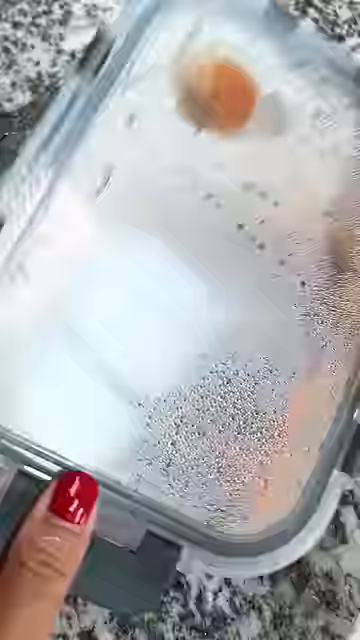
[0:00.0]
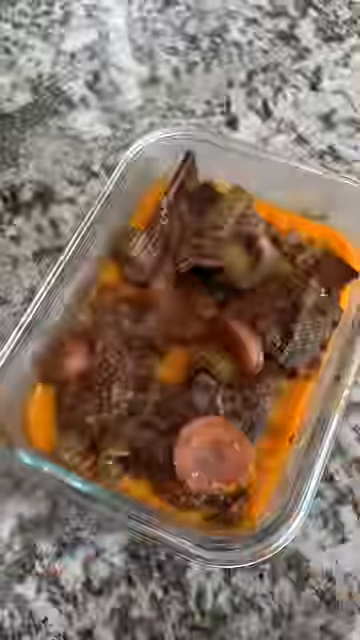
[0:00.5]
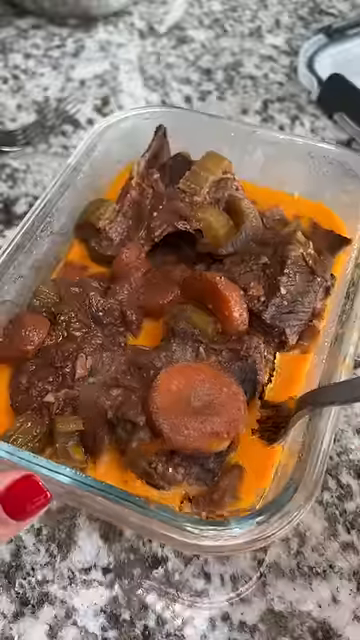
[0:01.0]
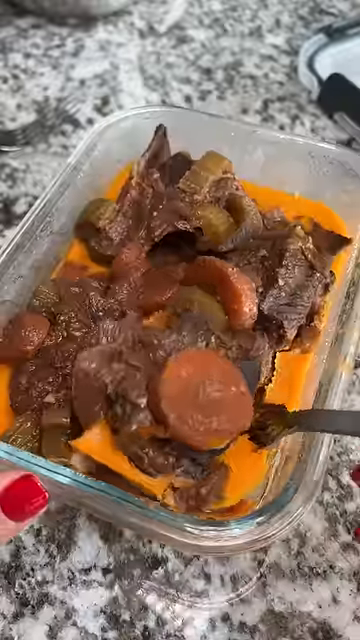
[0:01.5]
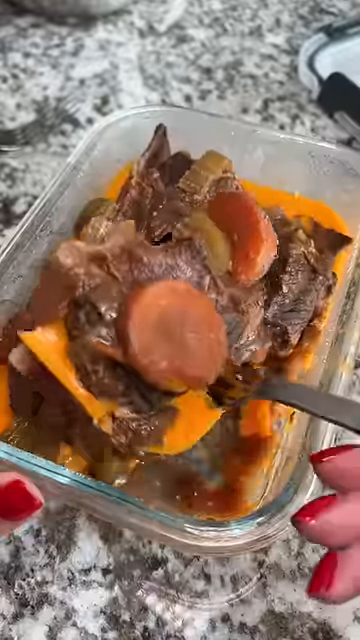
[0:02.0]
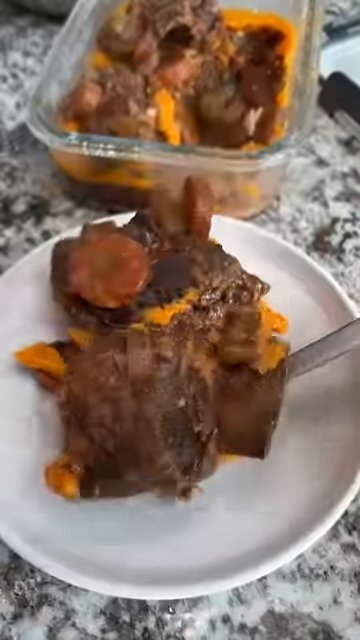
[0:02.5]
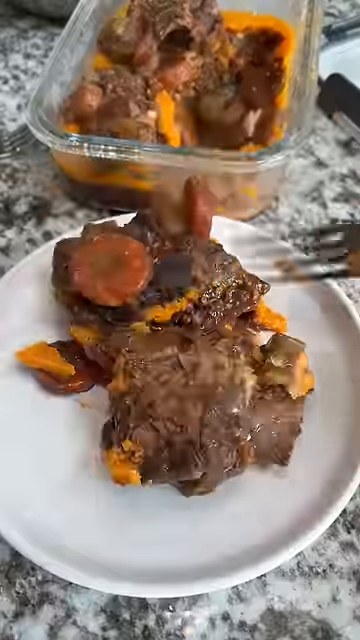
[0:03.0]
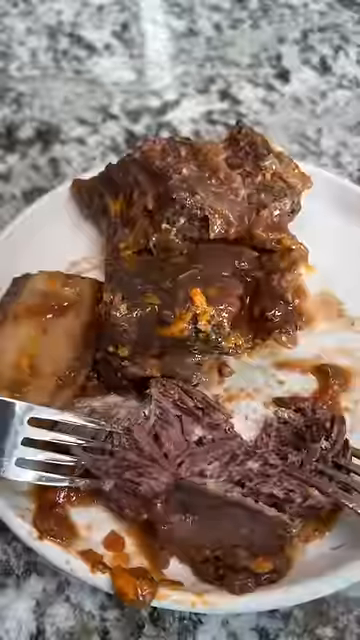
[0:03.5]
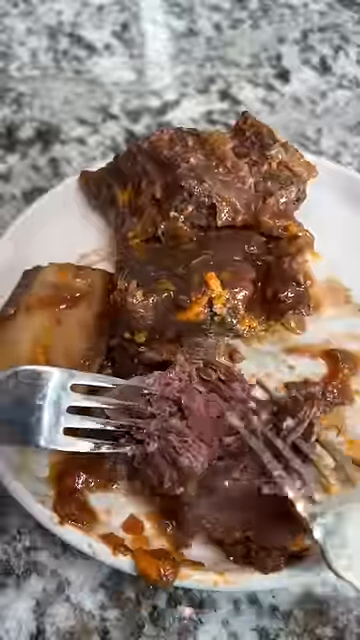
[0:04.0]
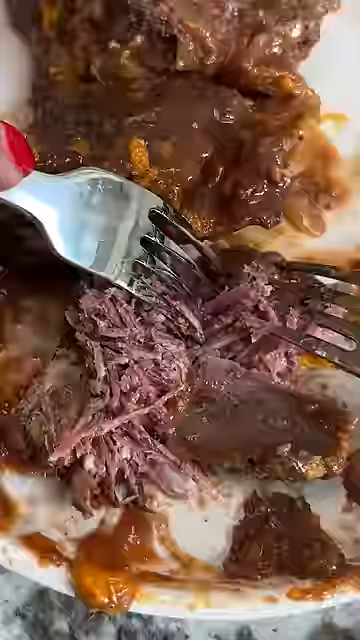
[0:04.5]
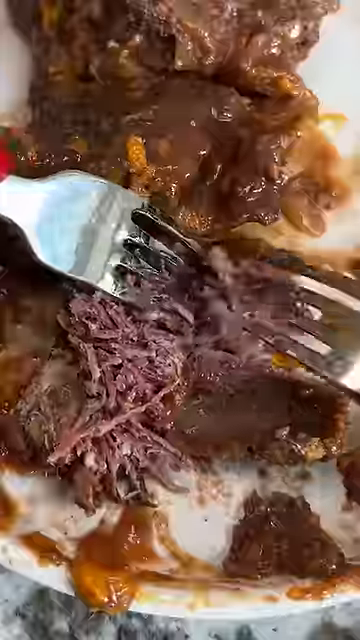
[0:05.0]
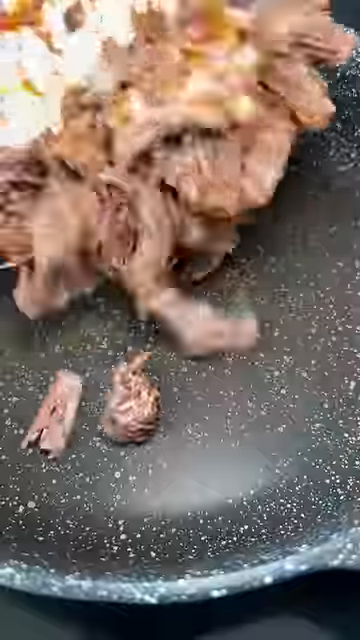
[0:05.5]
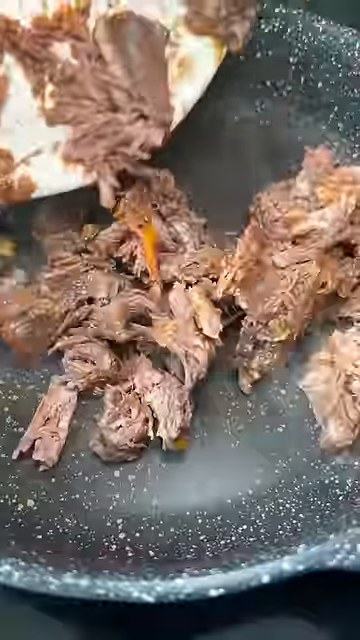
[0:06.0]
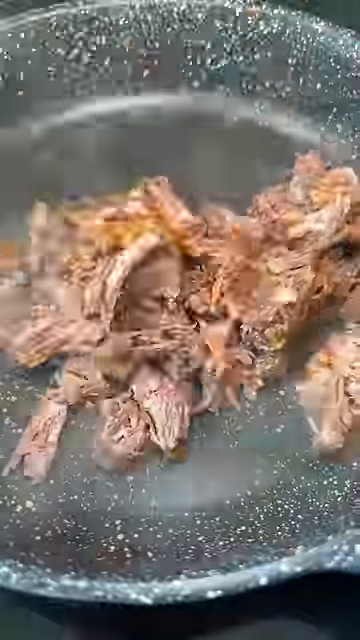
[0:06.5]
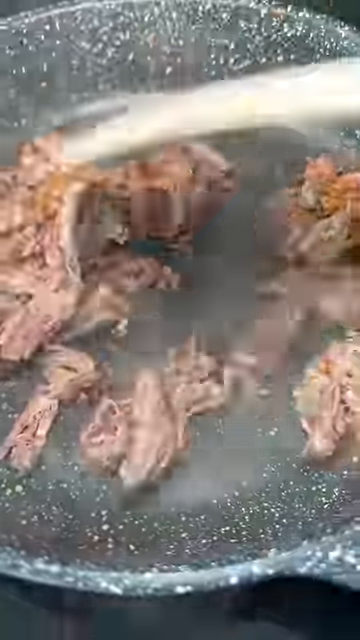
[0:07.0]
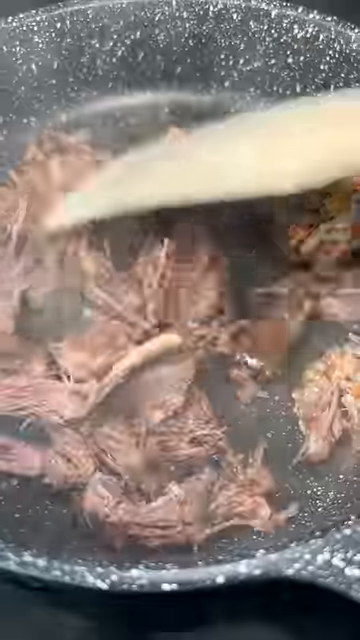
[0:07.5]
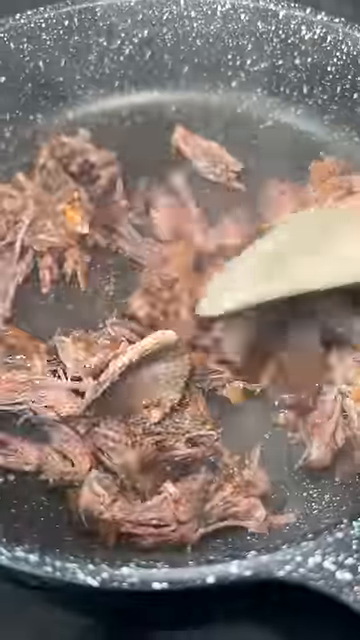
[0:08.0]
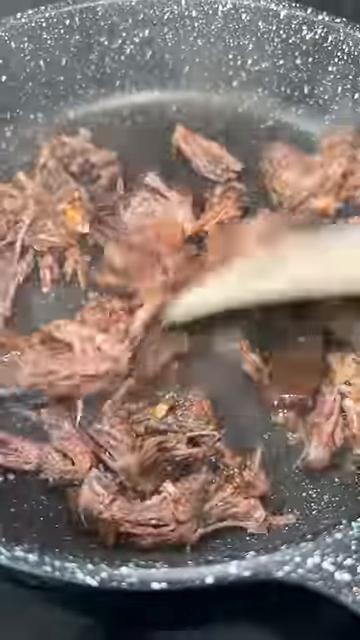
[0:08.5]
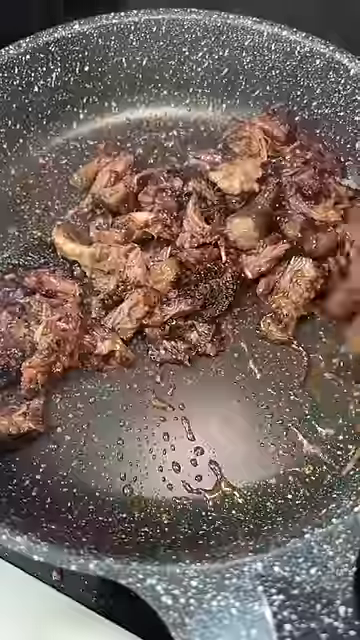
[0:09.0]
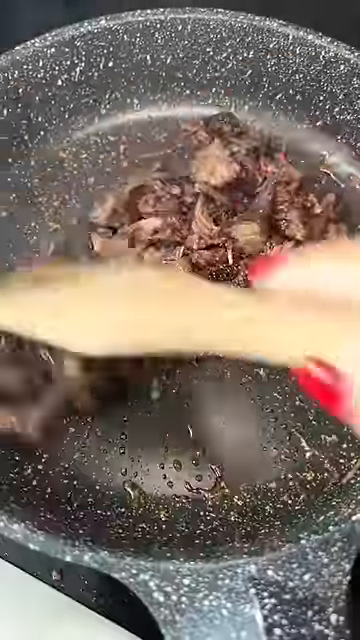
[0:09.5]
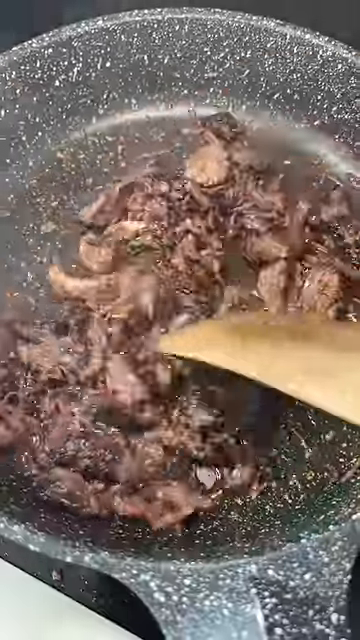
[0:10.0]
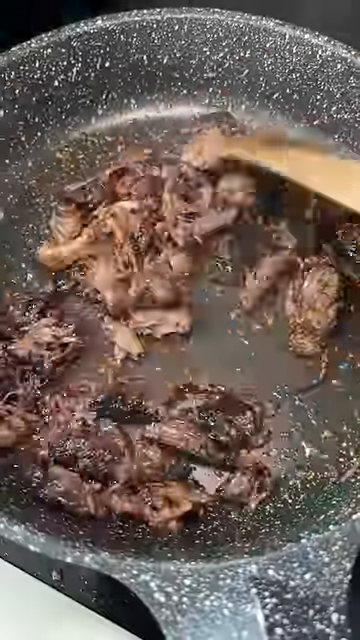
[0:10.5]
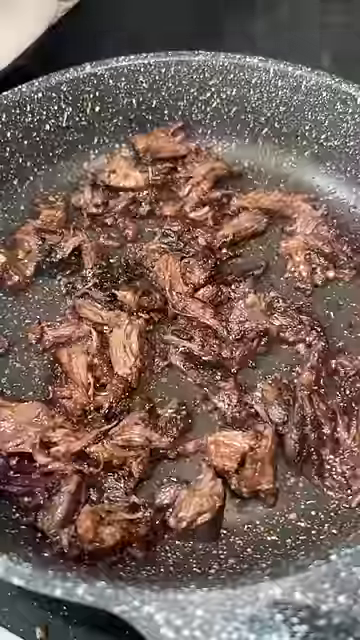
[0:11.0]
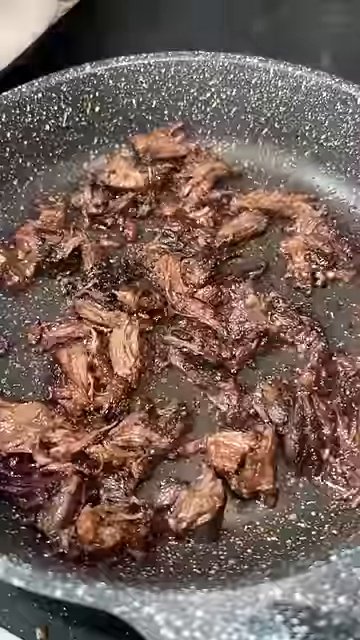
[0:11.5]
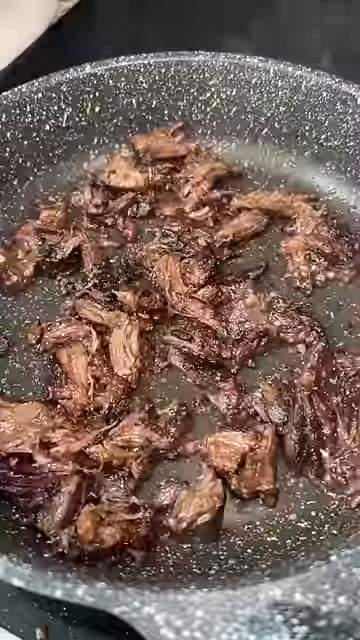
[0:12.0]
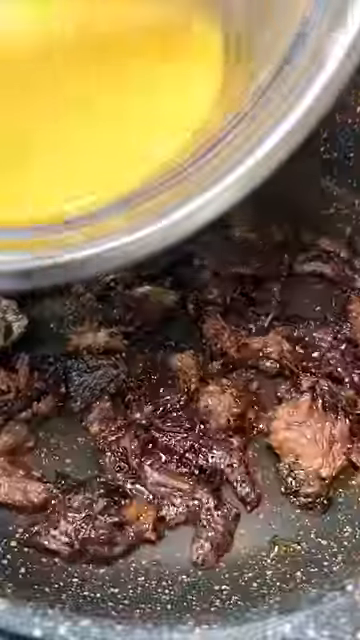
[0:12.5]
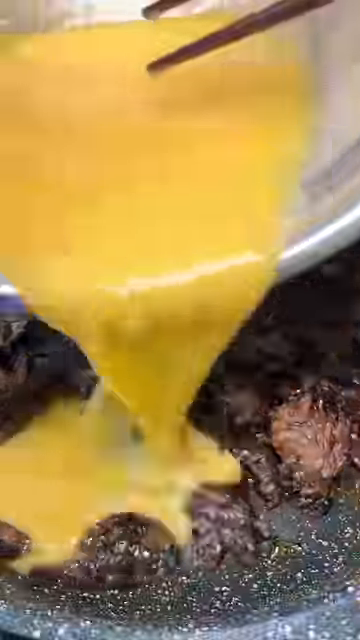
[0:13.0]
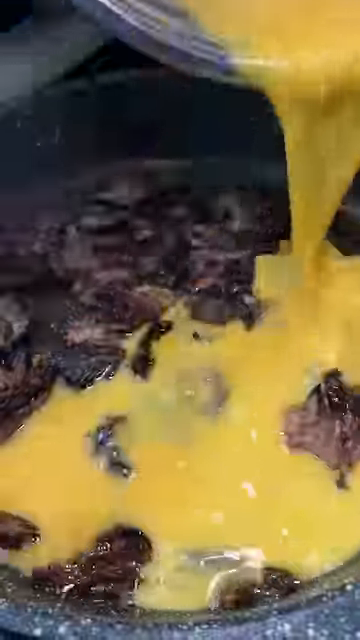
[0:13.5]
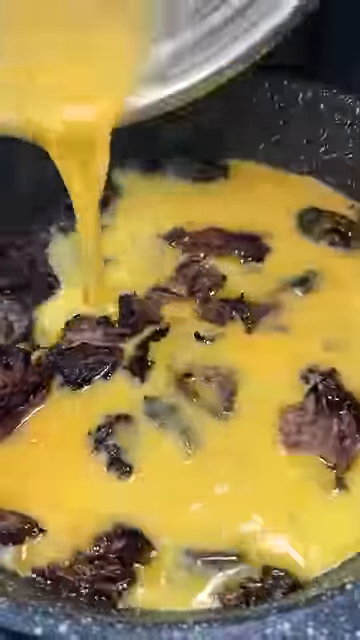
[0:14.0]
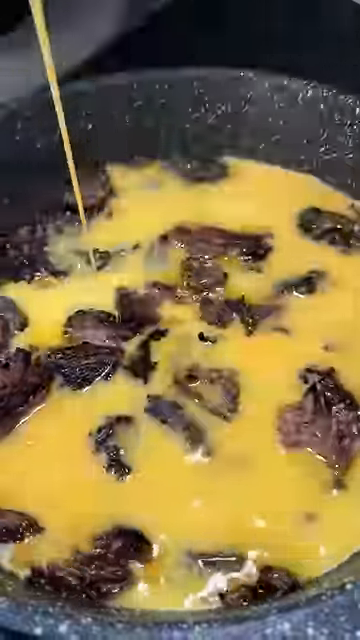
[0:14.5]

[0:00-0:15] Some leftover meat that looks like it could be brisket, or apparently leftover pot roast, appears to have been refrigerated, with the grease seemingly frozen. The carrots and other items from the pot roast appear to be removed, and just the meat goes into a pan to cook. Once the meat has been somewhat cooked down in the pan and pulled apart, egg is added to it, apparently to make some type of meat or roast beef omelet. Nothing other than the meat and egg is added to the dish.